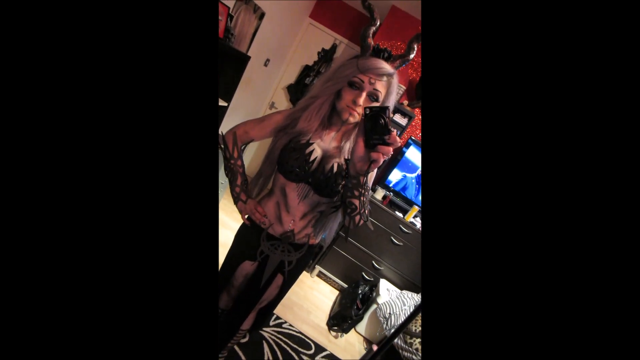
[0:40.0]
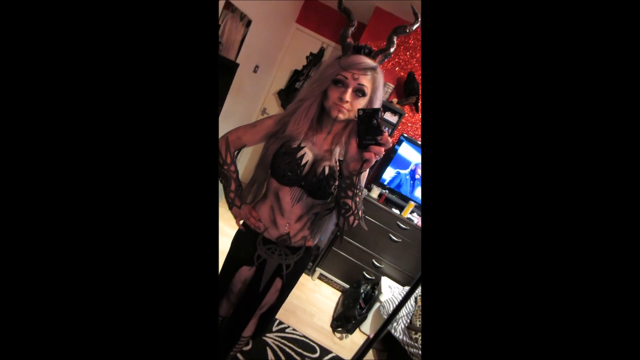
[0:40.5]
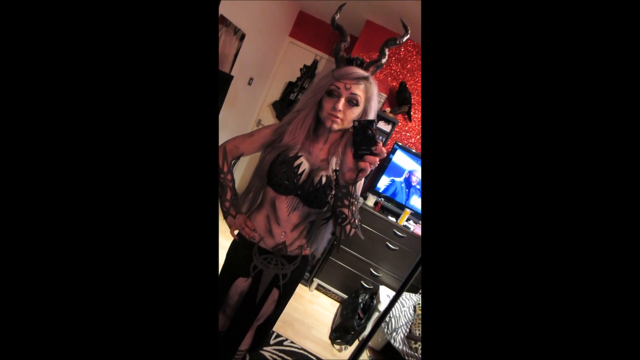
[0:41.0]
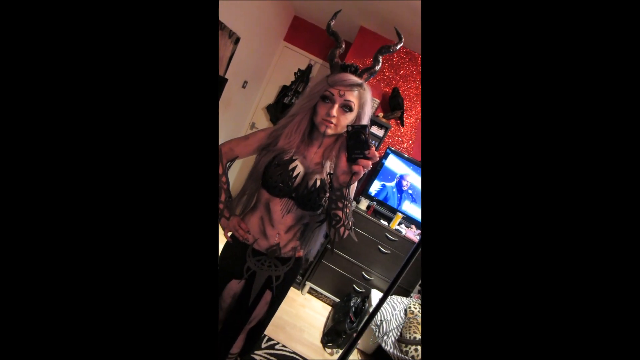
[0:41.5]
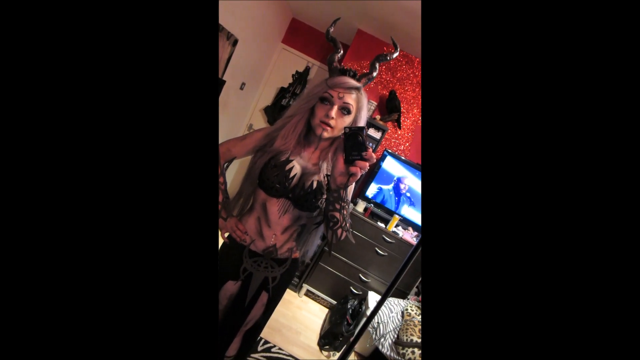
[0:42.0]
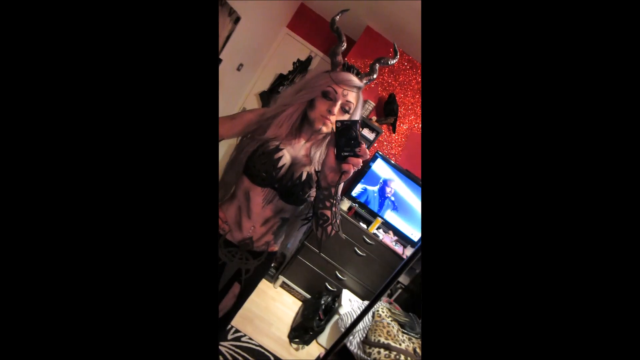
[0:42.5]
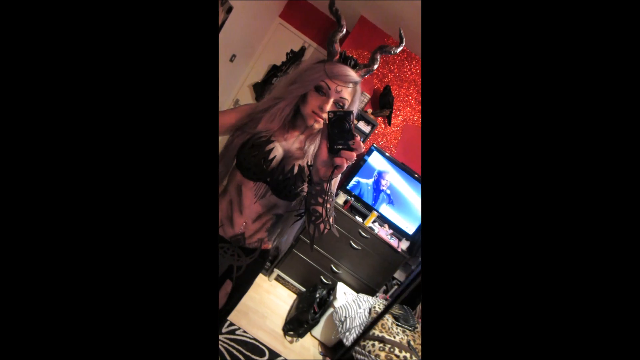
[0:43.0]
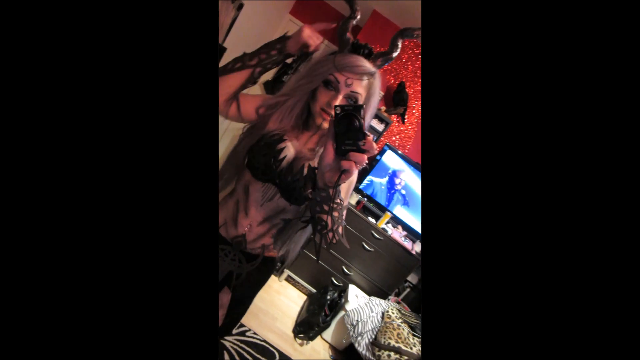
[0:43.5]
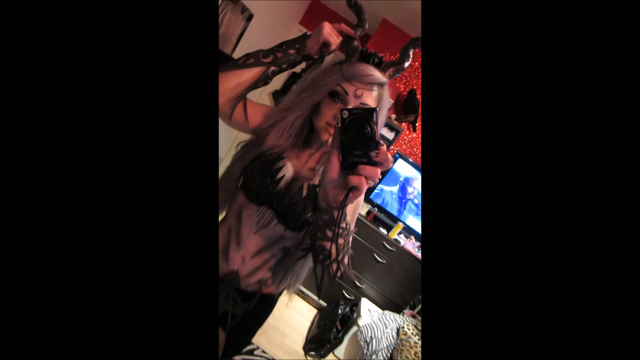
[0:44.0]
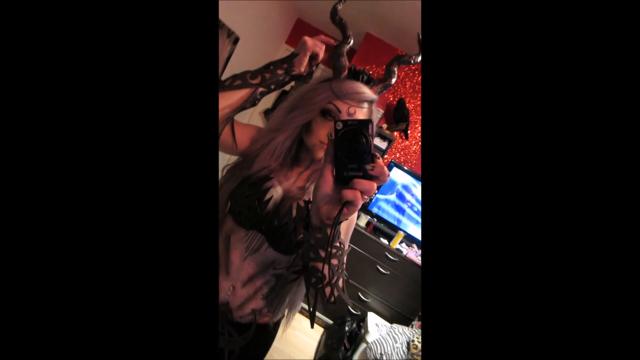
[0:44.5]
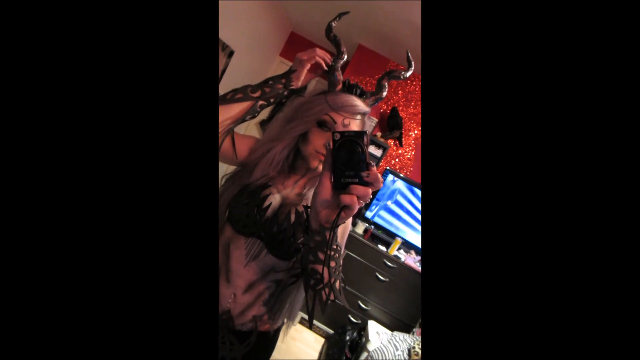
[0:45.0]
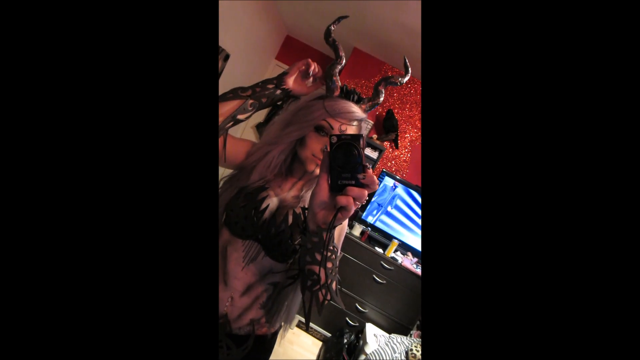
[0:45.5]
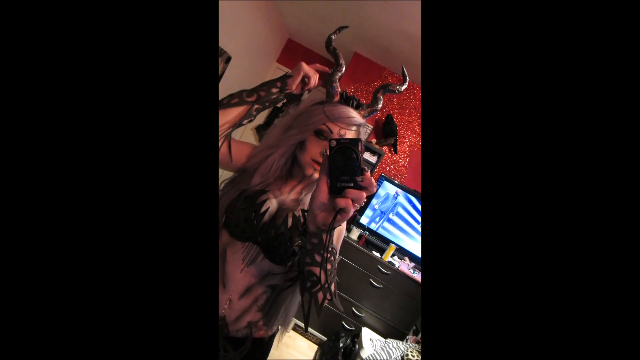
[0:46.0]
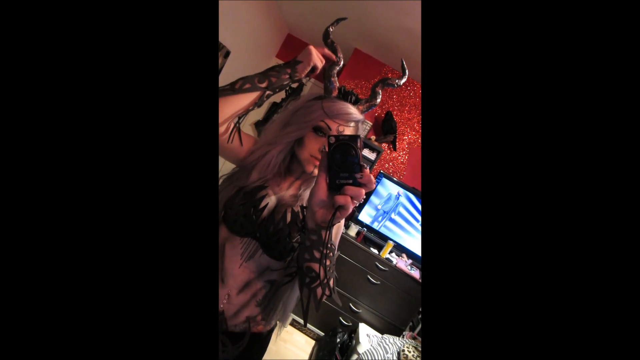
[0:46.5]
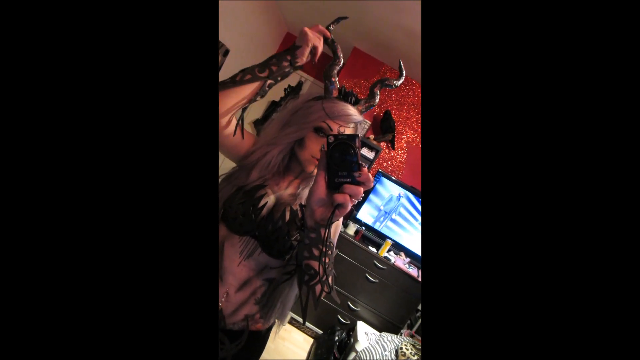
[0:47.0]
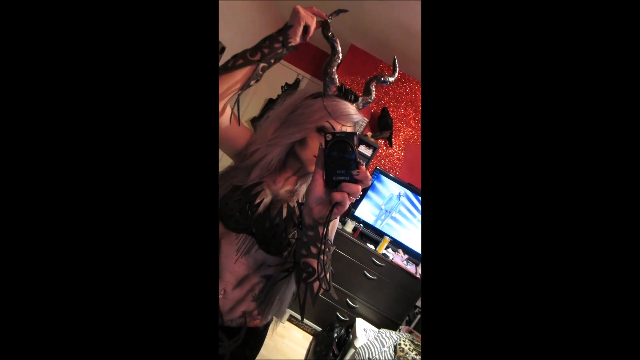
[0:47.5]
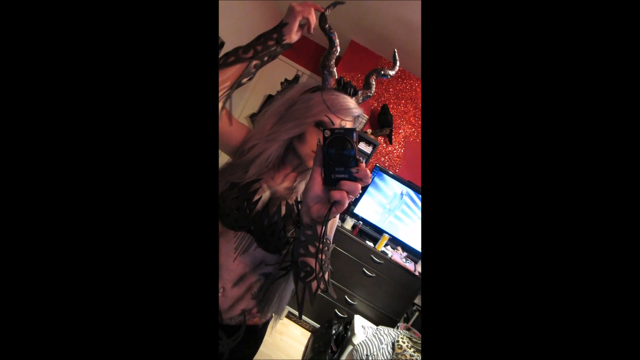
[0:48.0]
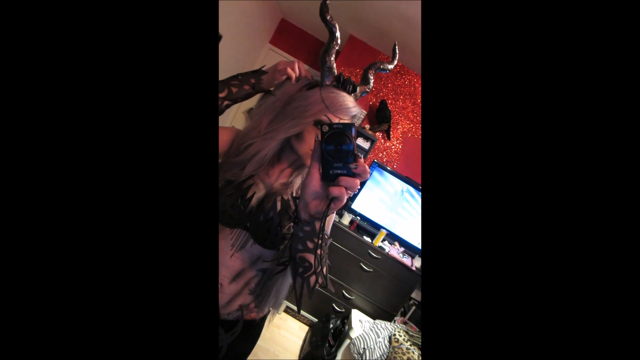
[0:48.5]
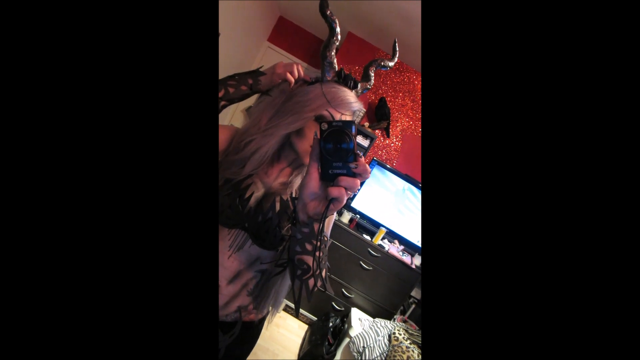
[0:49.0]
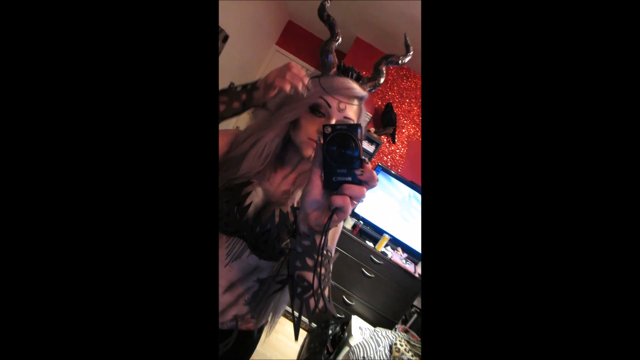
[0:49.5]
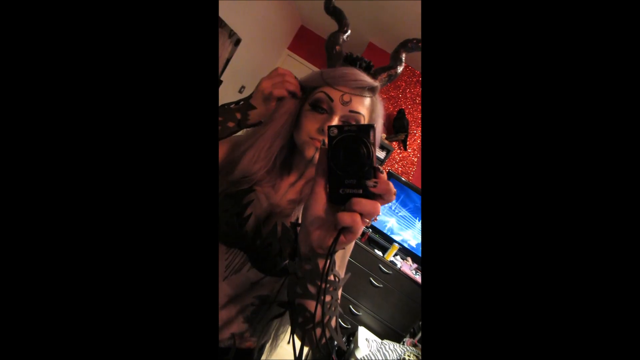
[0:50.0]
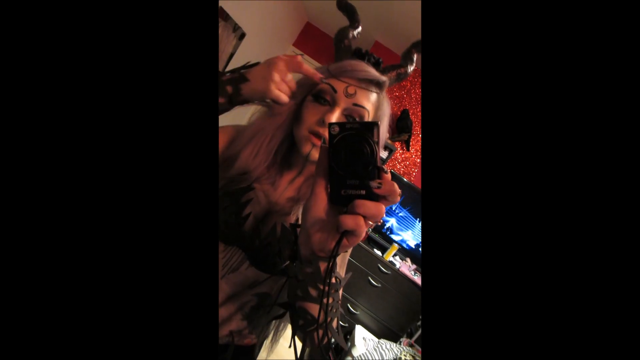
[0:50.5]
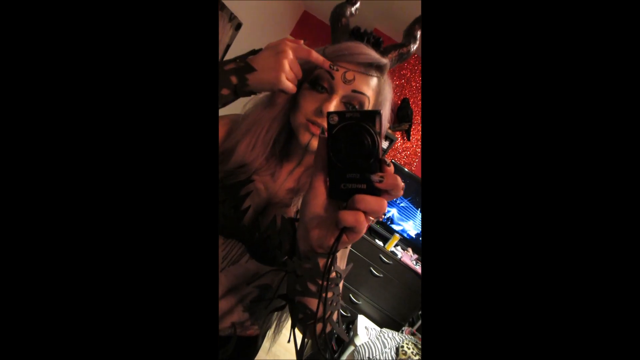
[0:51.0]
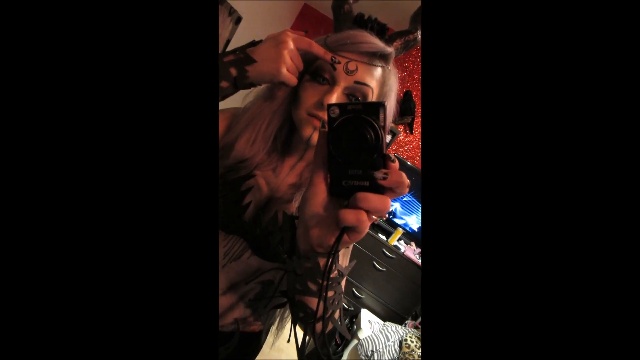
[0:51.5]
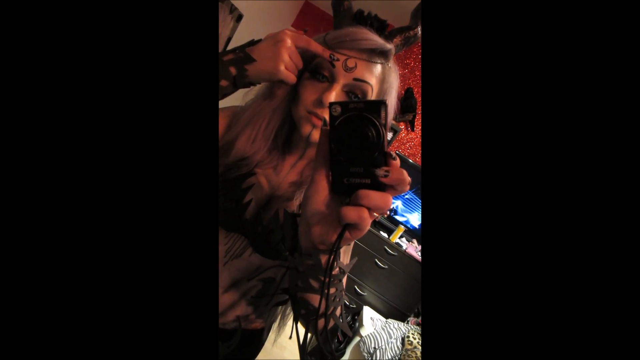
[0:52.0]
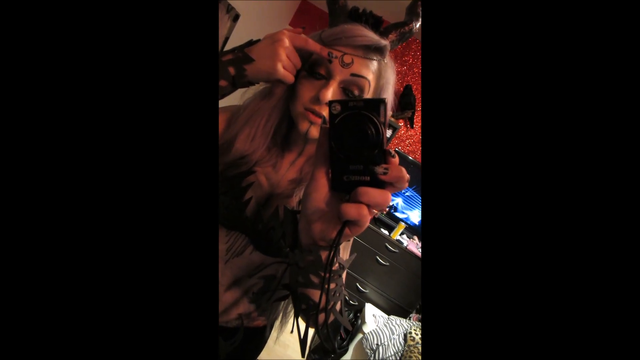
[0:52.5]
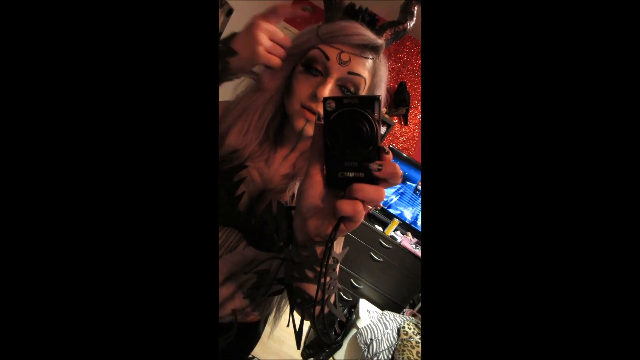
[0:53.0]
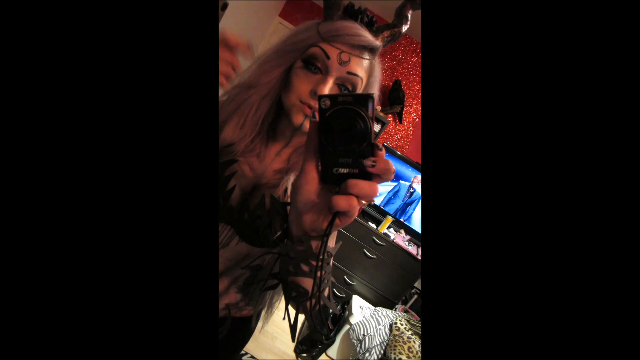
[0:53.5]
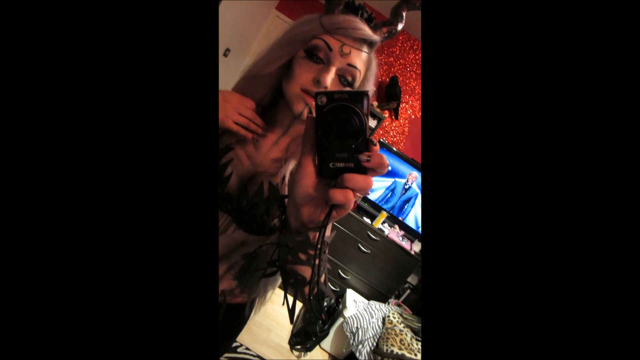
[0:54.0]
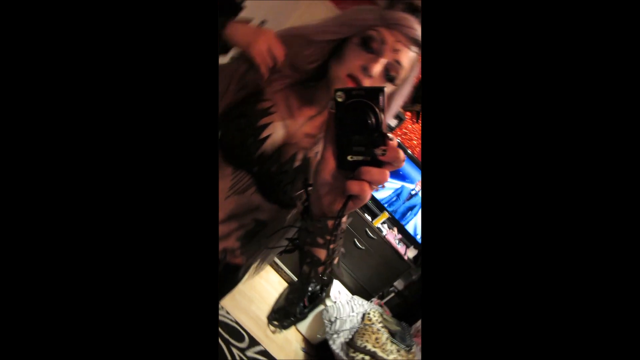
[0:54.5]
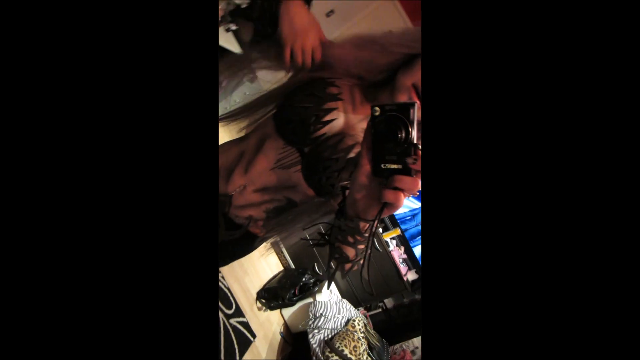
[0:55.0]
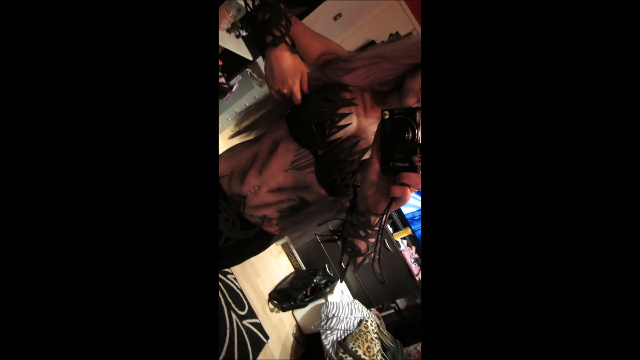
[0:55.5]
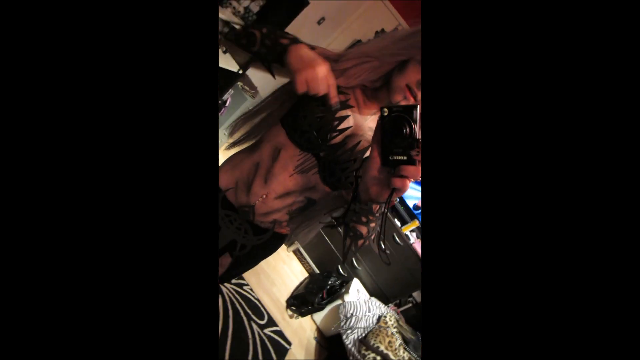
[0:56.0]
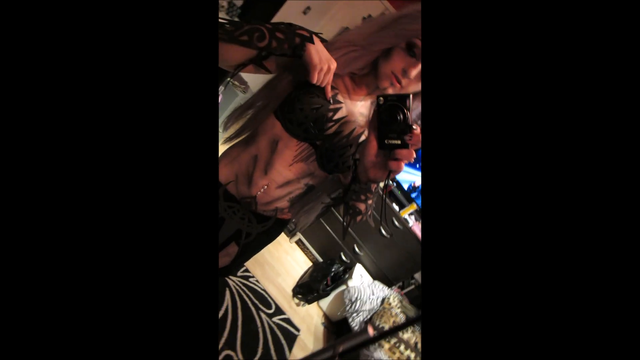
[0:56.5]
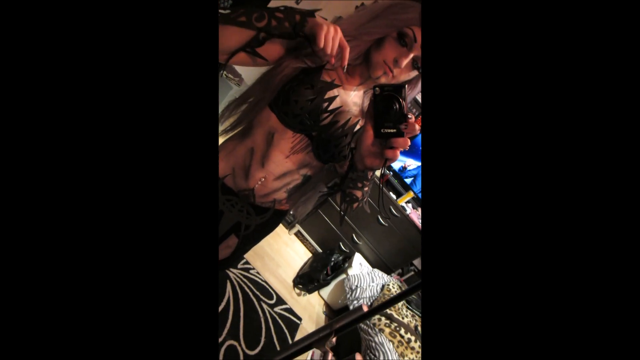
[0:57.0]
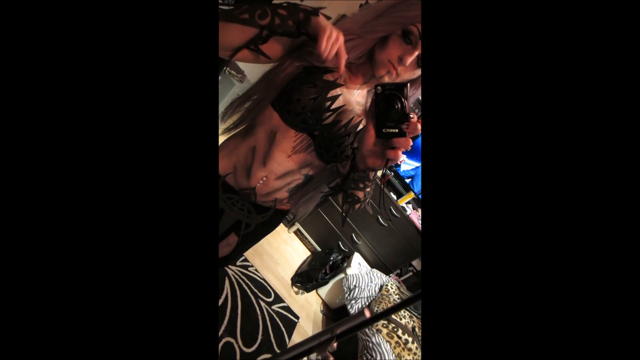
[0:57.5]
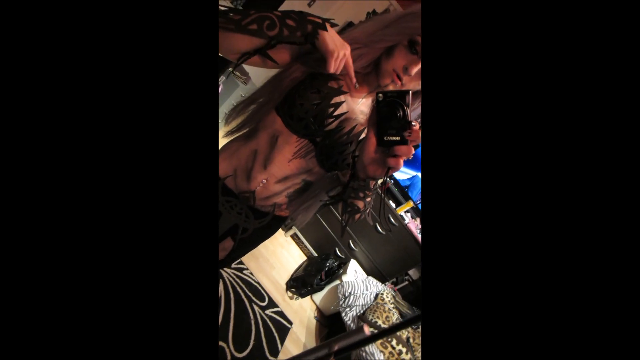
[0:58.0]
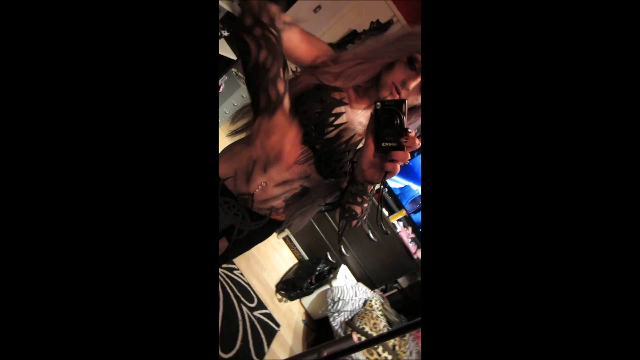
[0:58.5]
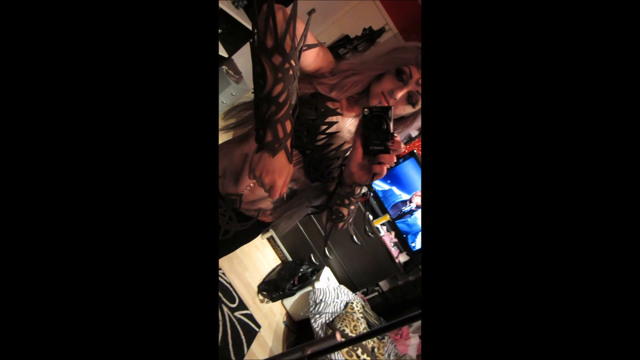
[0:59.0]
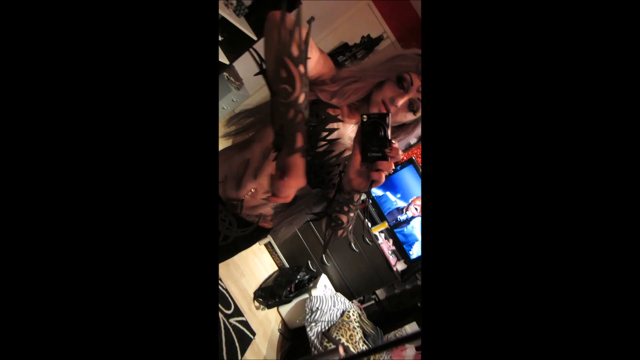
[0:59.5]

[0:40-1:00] In the mirror position, the person is talking and points at the horns on top of their head, pointing at the root of the horn, then at the sigil icon on their forehead, and then at their chest area, apparently at the bikini or bra top they have on. They focus on what is, from the viewer's side, the left side of their outfit. They are seen holding a digital camera as they record, really showing off the outfit and seemingly going over the details of the decal. There is no text, but they physically point to the parts they are talking about as they go along showing their outfit.